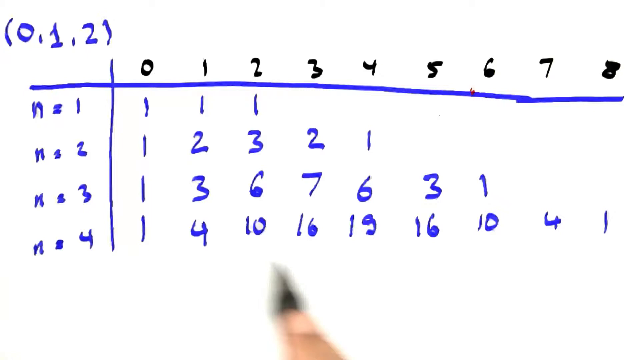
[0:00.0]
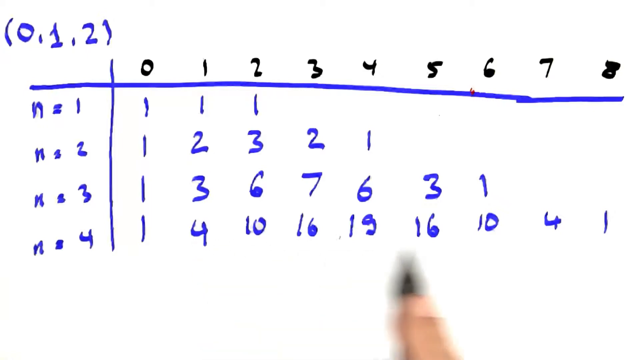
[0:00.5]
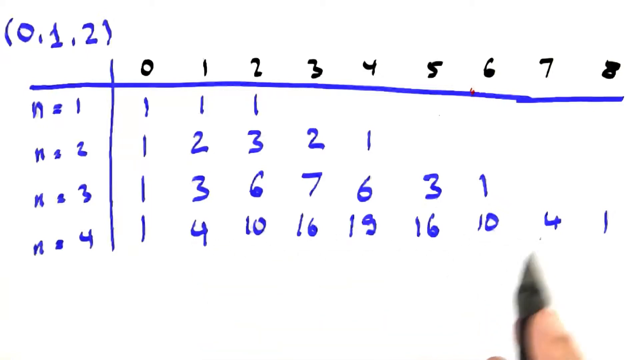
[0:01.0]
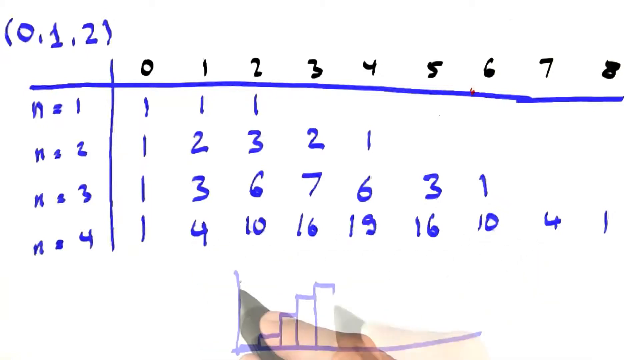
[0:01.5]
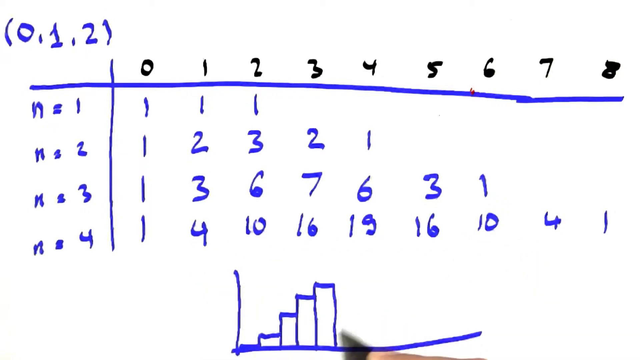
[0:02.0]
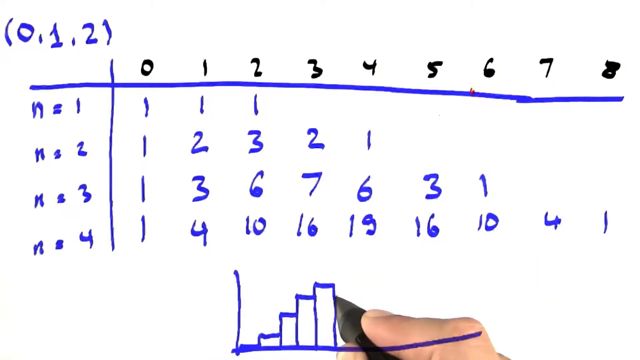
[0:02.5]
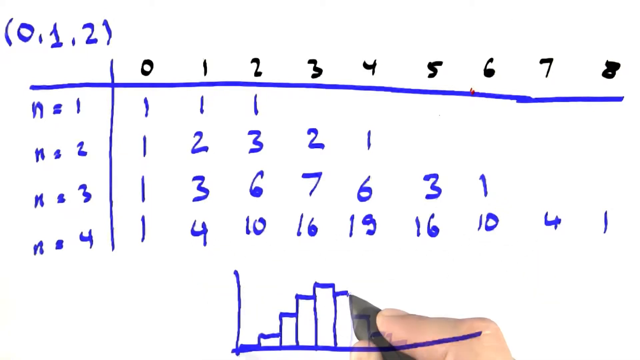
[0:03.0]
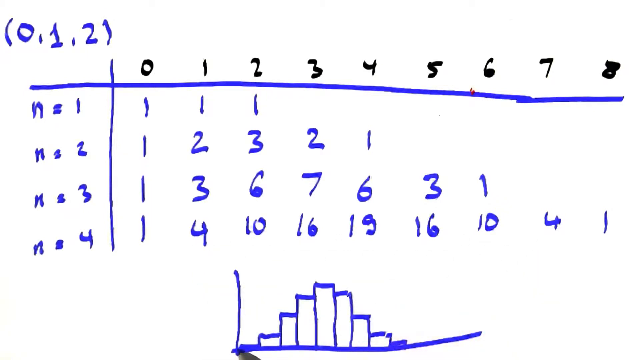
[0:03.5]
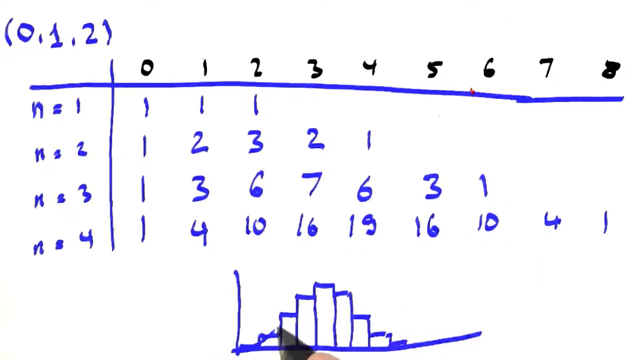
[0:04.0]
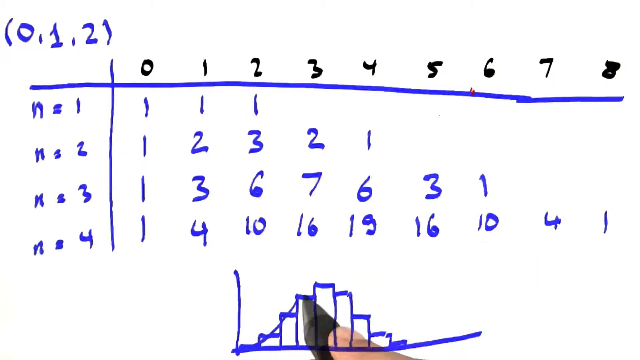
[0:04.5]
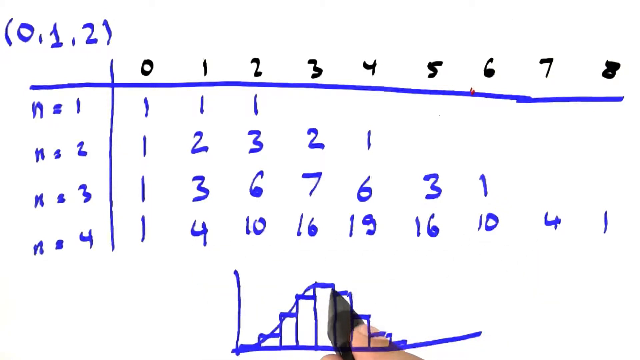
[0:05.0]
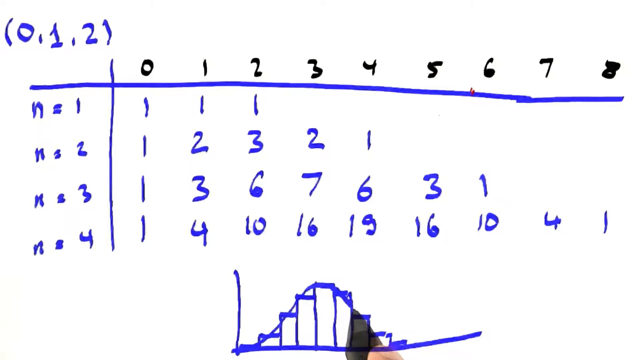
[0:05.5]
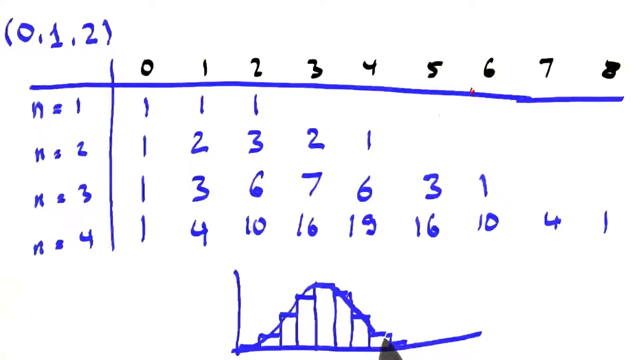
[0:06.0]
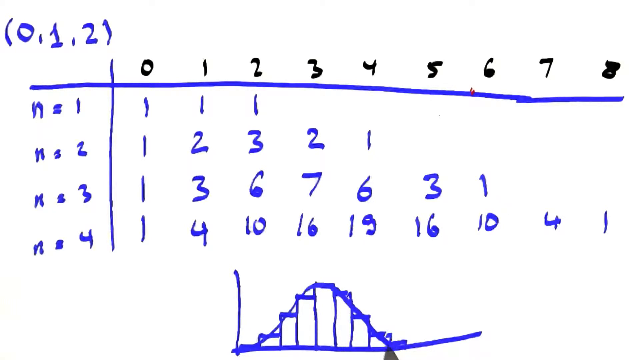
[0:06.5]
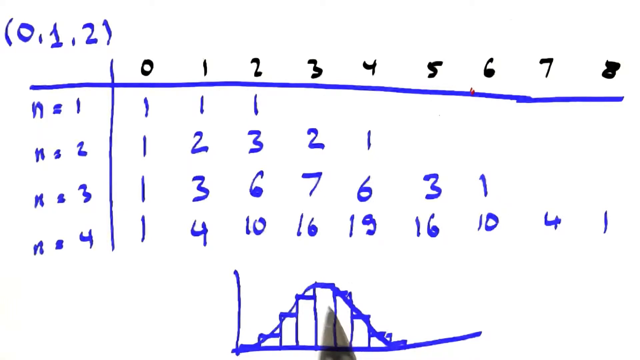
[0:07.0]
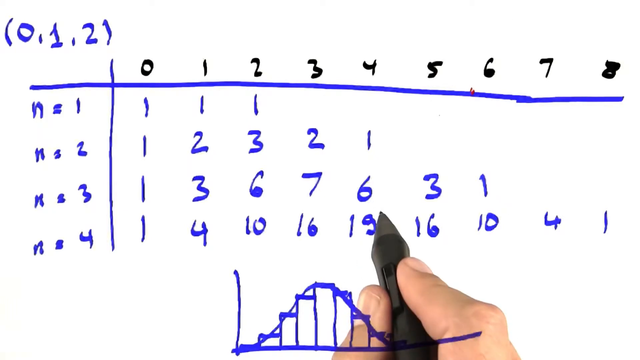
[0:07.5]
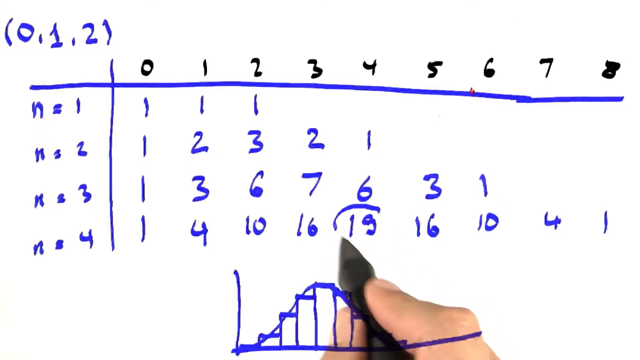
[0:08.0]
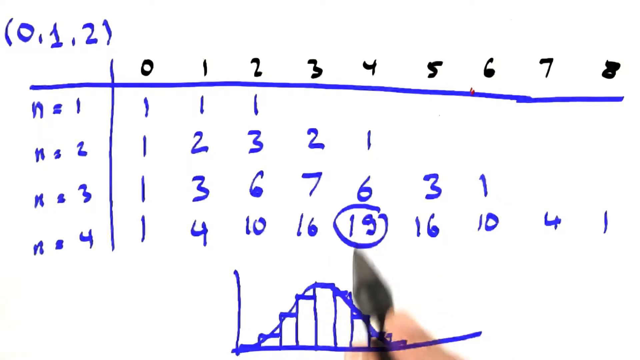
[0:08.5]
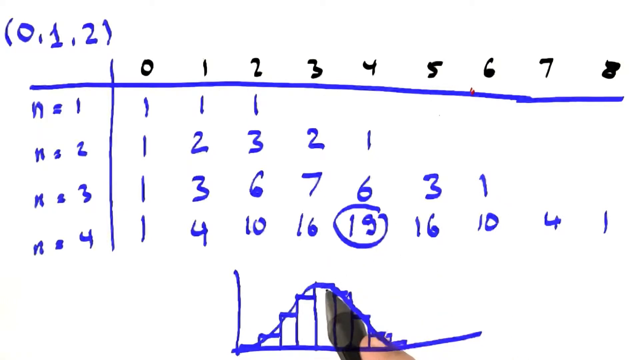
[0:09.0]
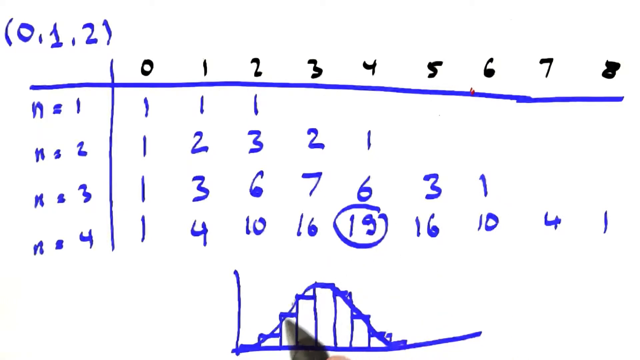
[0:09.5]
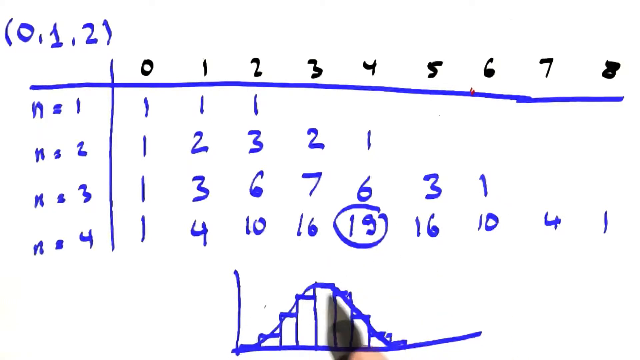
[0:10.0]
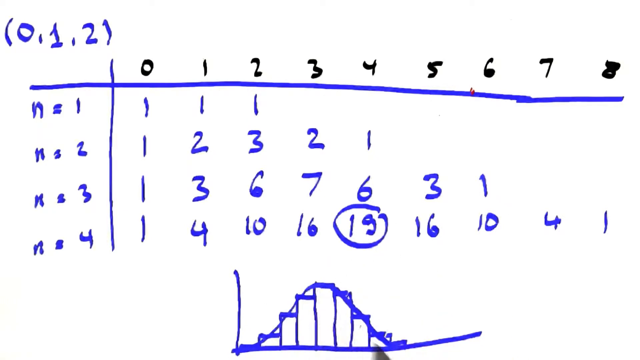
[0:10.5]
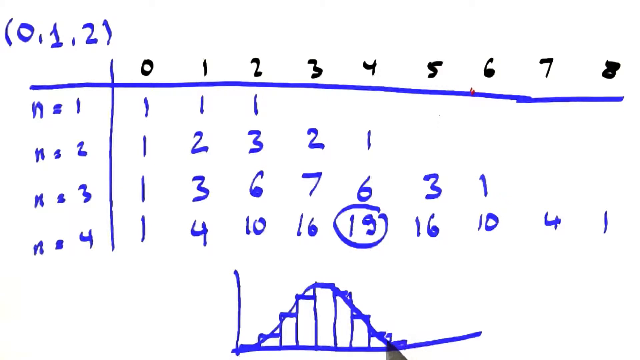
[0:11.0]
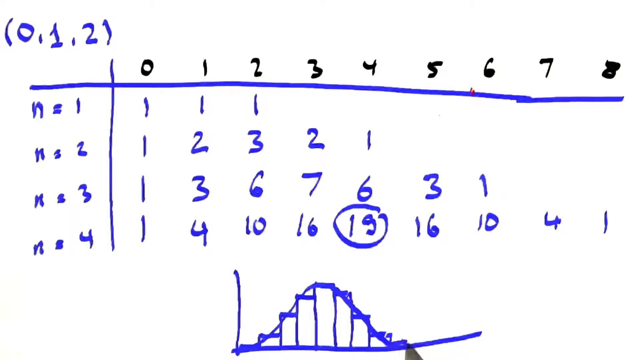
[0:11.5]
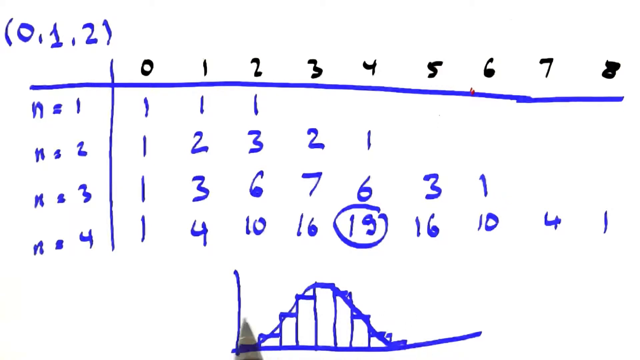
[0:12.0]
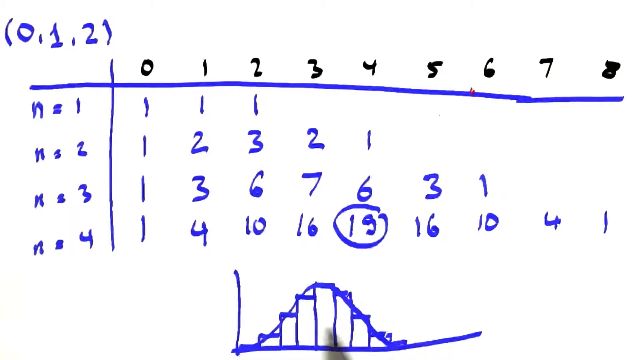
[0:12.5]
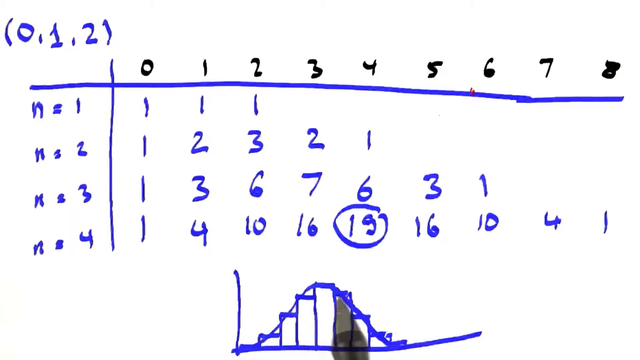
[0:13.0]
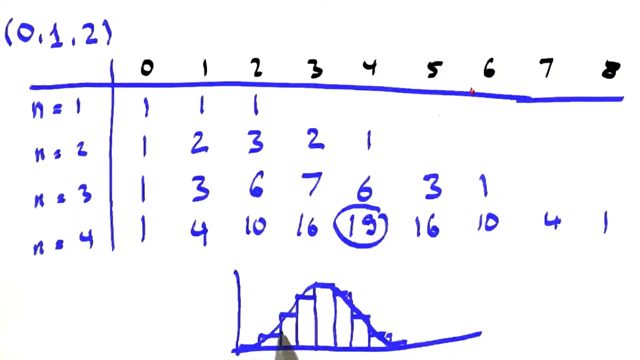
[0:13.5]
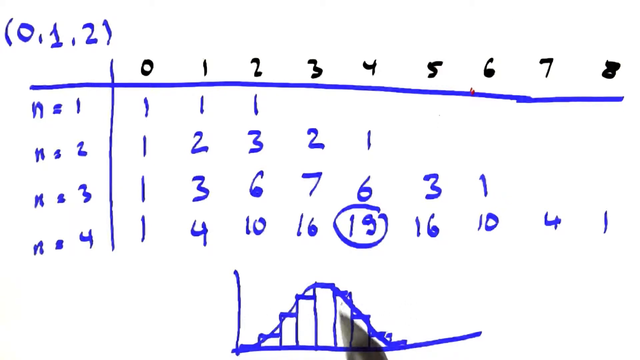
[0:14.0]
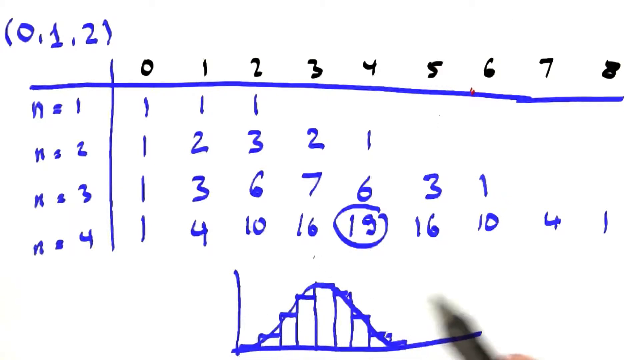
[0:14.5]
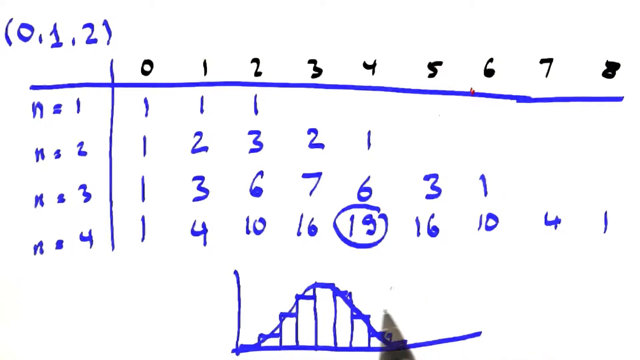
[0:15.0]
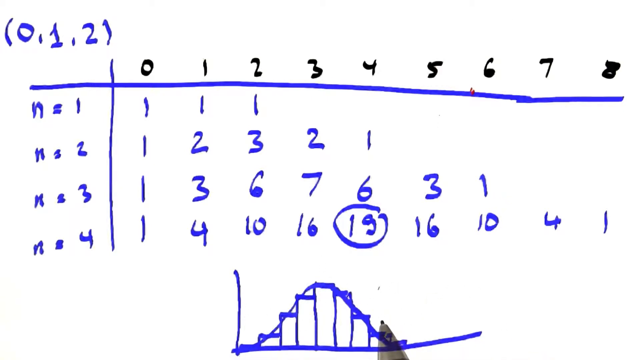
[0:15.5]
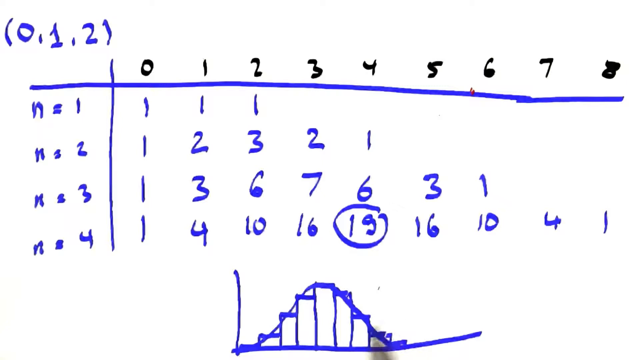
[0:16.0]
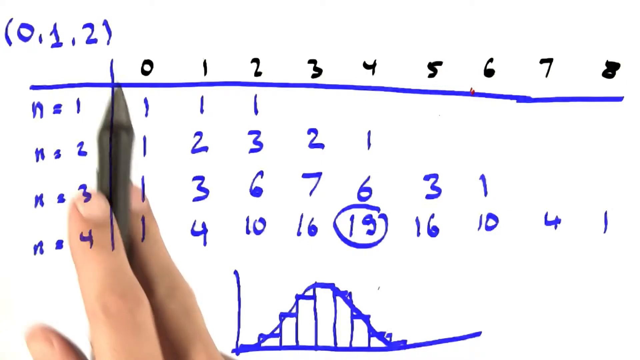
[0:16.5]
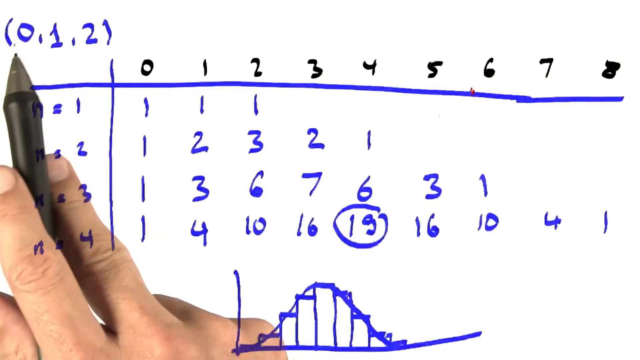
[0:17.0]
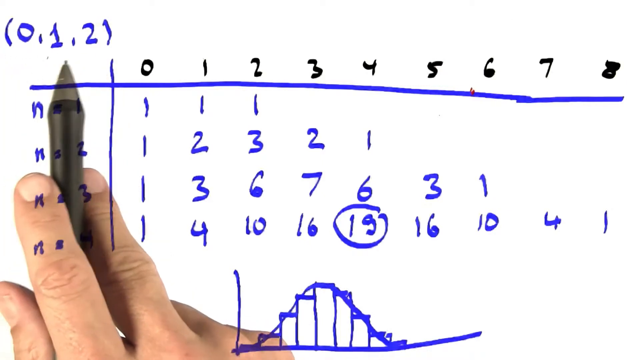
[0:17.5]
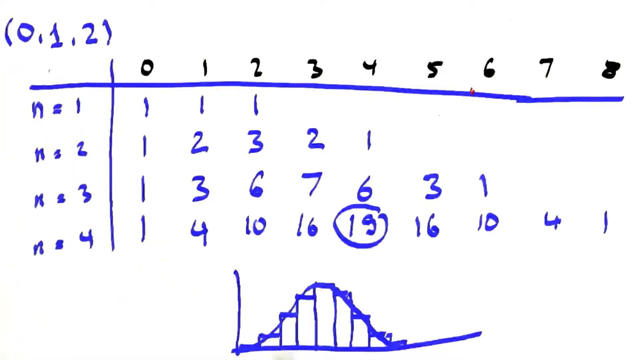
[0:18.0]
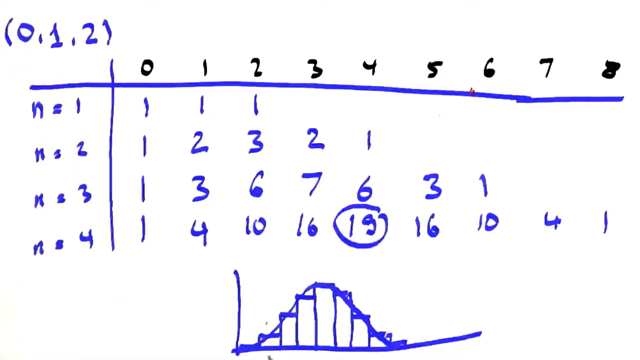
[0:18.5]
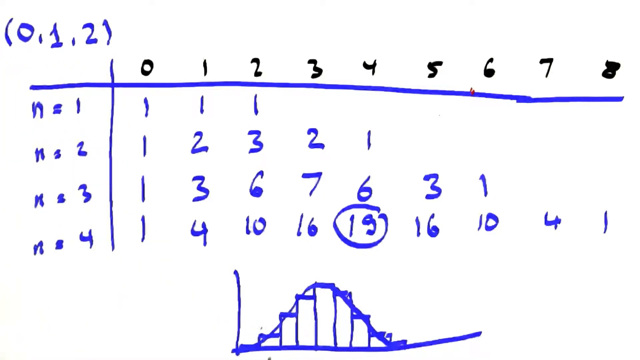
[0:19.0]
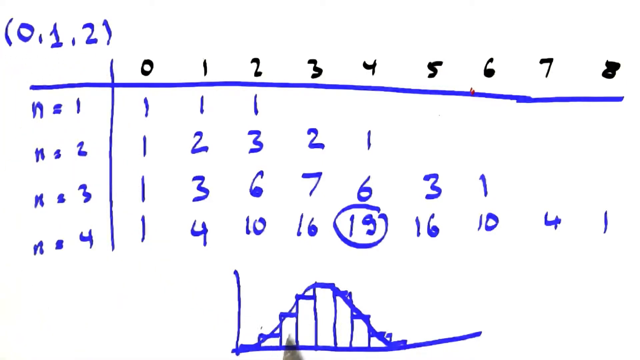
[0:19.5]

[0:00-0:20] The video begins with a hand-drawn number set in blue ink at the top, in parentheses, reading "012". Below it, also hand-drawn in blue, is a vertical line near the left-hand side of the screen, crossed near its very top by a long horizontal blue line. Across the top, starting to the right of the vertical line, are the numbers 0, 1, 2, 3, 4, 5, 6, 7 and 8 in black. On the left-hand side, in the rectangle formed by the intersection of the two lines, it says "n = 1", and across from that "1, 1, 1". Below that it says "n = 2" with "1, 2, 3, 2, 1" across from it, then "n = 3" with "1, 3, 6, 7, 6, 3, 1", and then "n = 4" with the numbers "1, 4, 10, 16, 19, 16, 10, 4, 1". Below that, a hand with a pen draws a small series of seven vertical bars that start short, become tallest at the fourth one, and then shorten back down. An arc is drawn across the top of the bars, forming a parabolic curve.